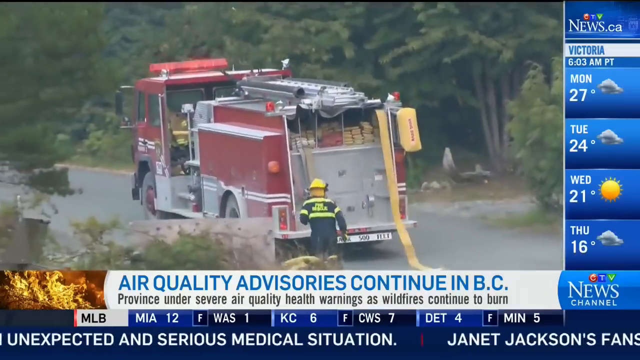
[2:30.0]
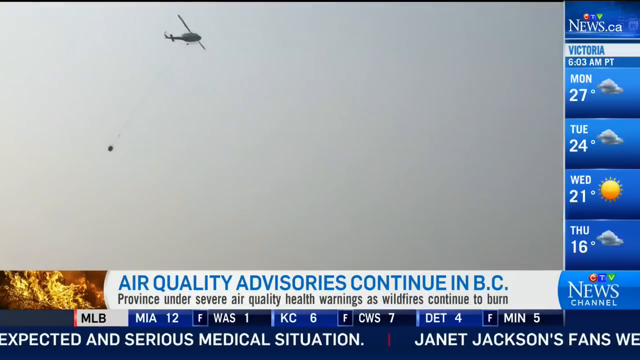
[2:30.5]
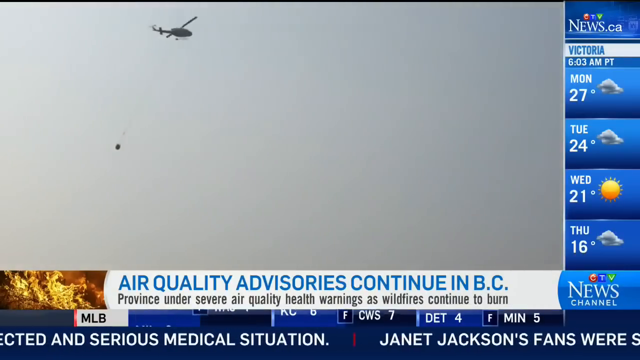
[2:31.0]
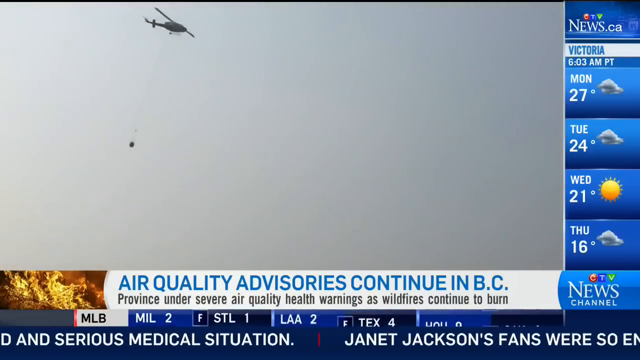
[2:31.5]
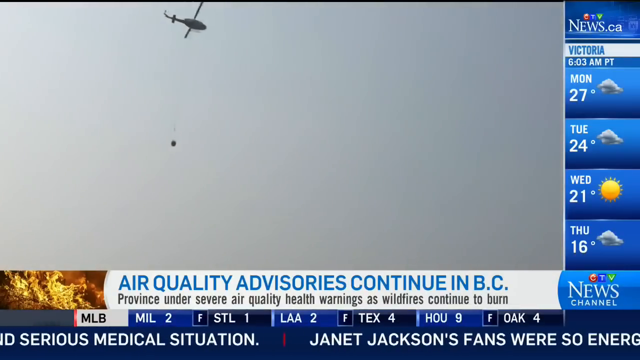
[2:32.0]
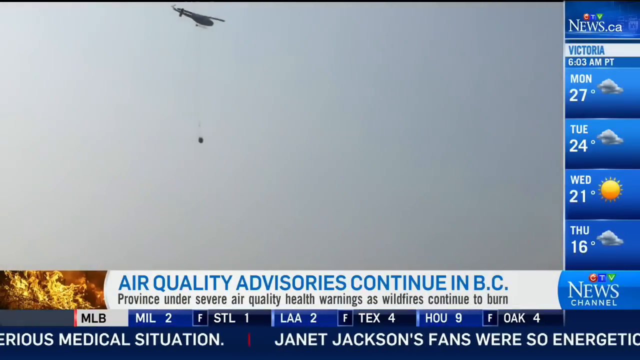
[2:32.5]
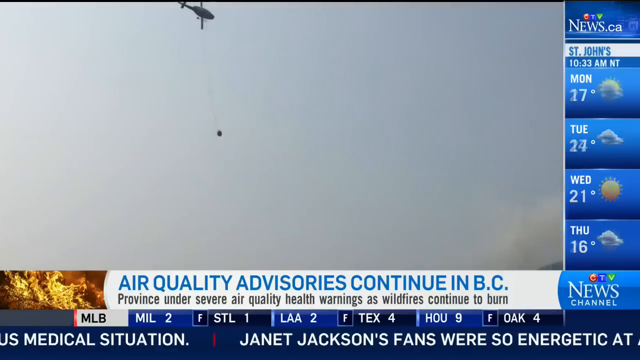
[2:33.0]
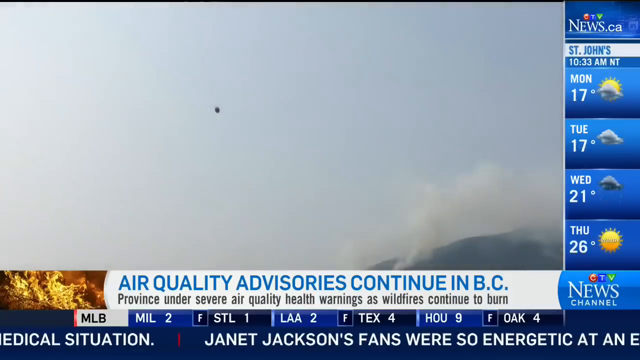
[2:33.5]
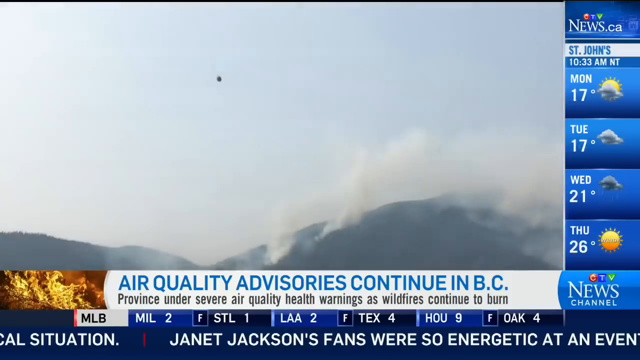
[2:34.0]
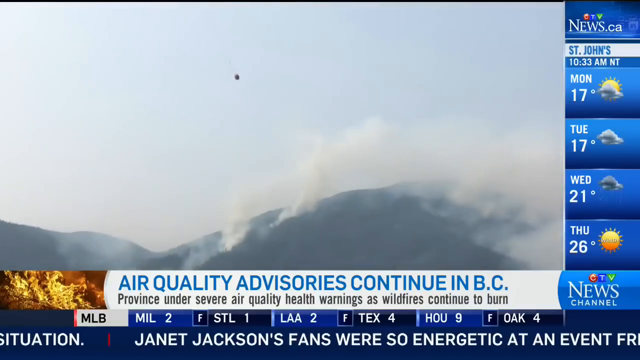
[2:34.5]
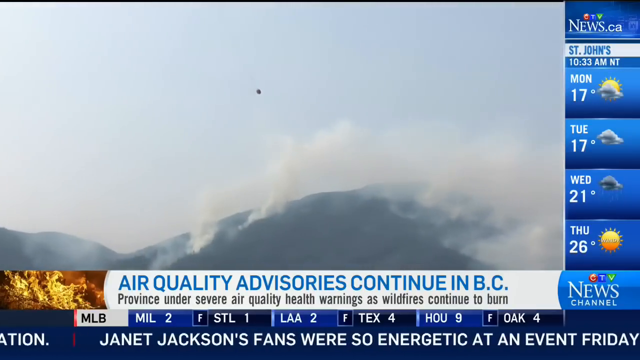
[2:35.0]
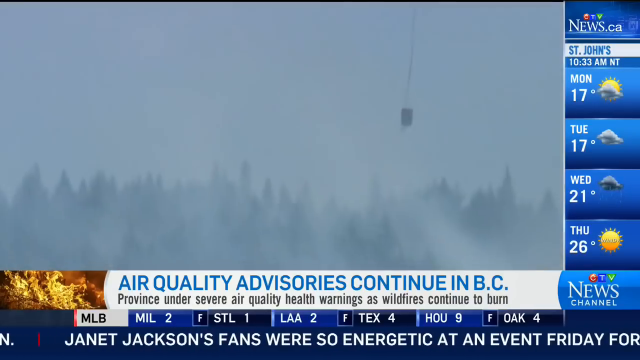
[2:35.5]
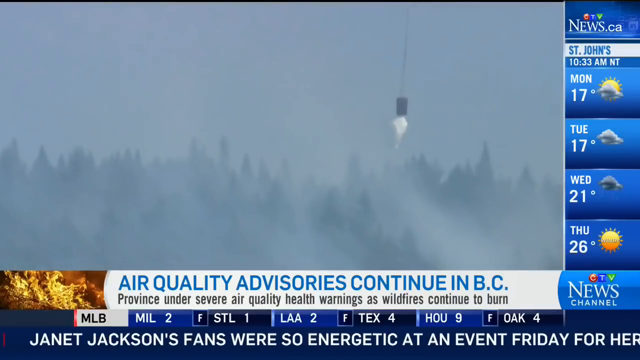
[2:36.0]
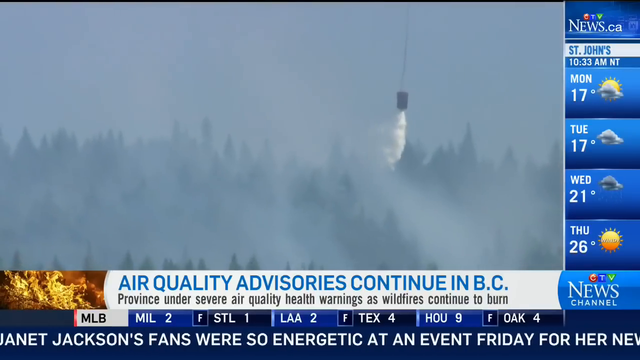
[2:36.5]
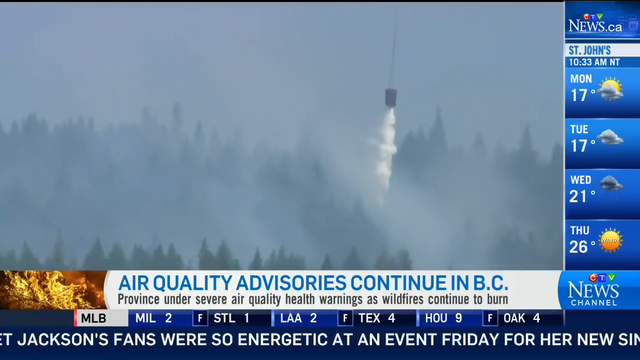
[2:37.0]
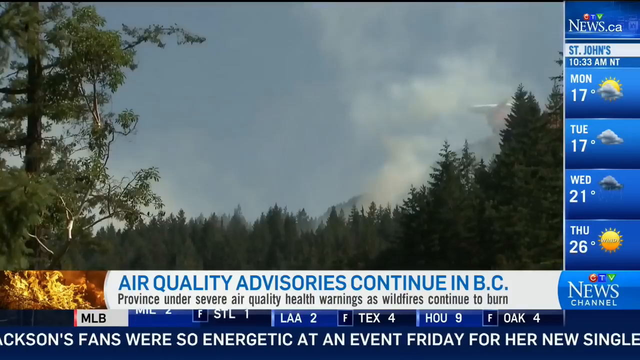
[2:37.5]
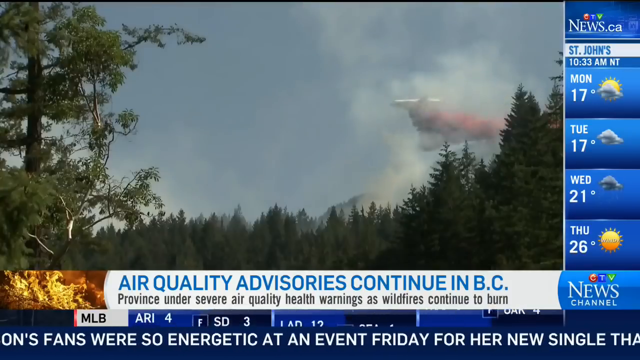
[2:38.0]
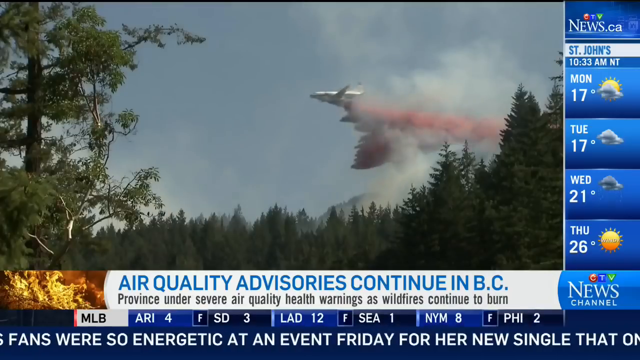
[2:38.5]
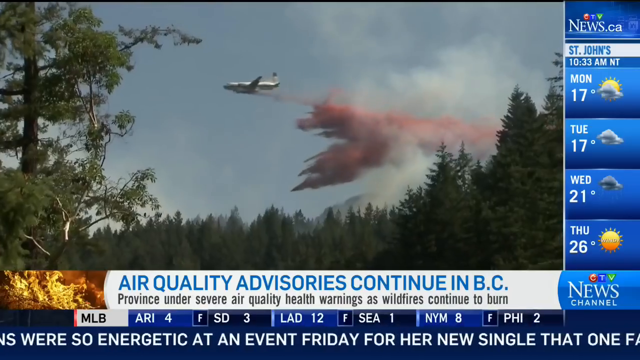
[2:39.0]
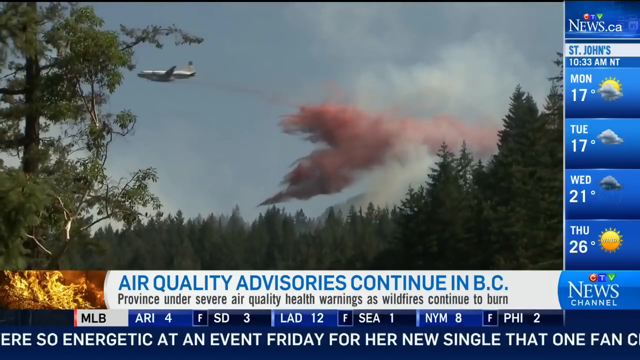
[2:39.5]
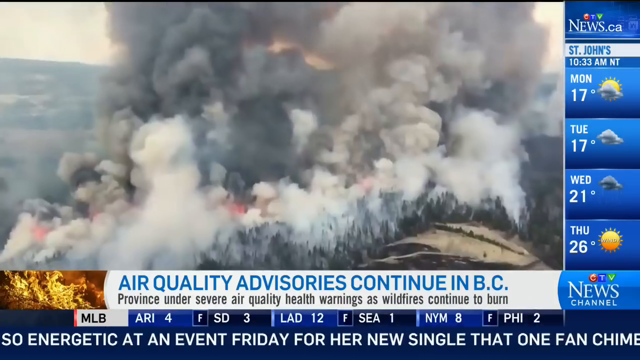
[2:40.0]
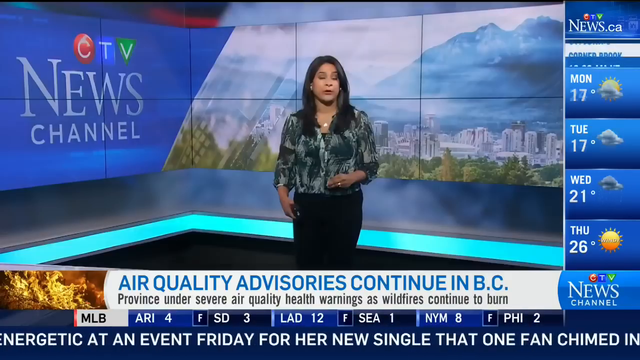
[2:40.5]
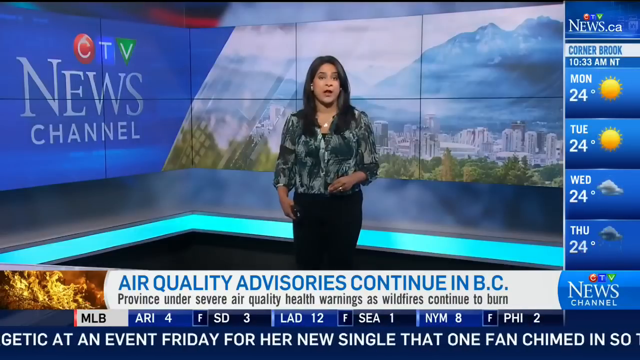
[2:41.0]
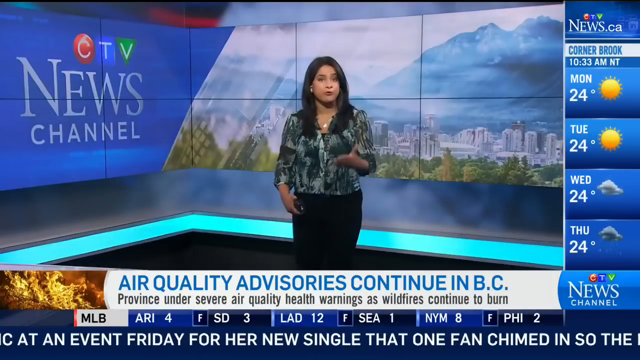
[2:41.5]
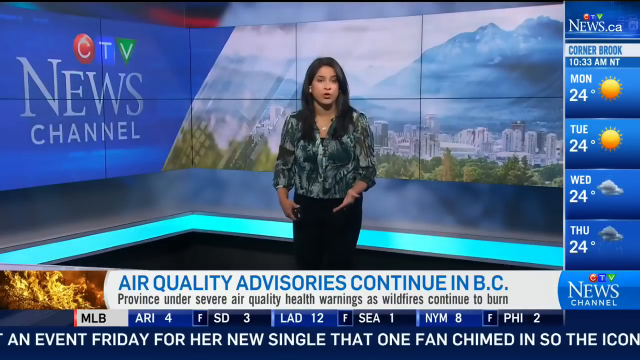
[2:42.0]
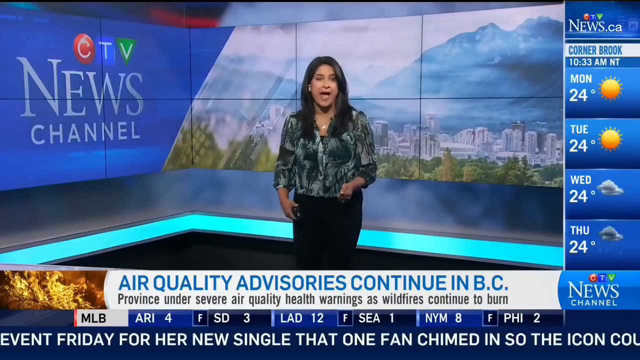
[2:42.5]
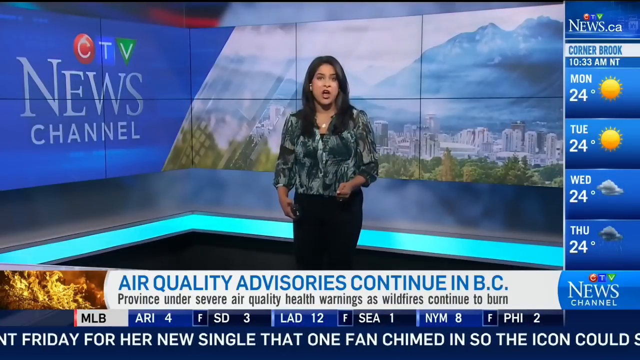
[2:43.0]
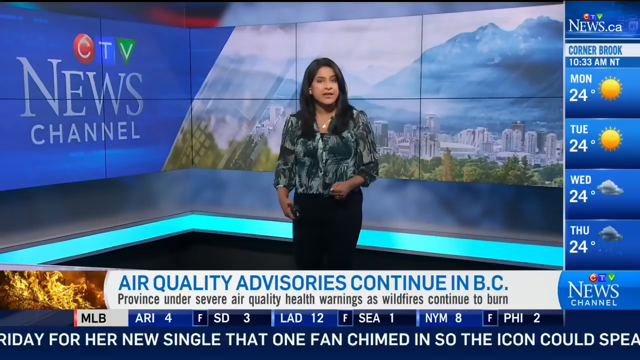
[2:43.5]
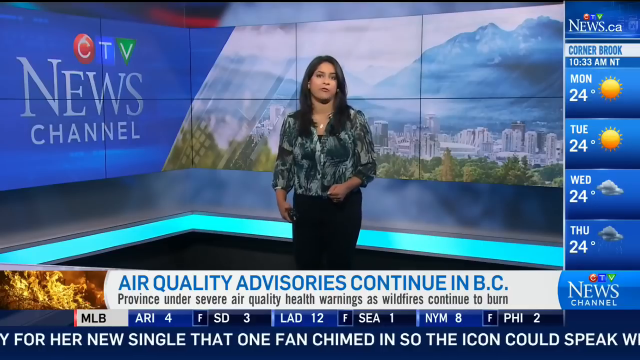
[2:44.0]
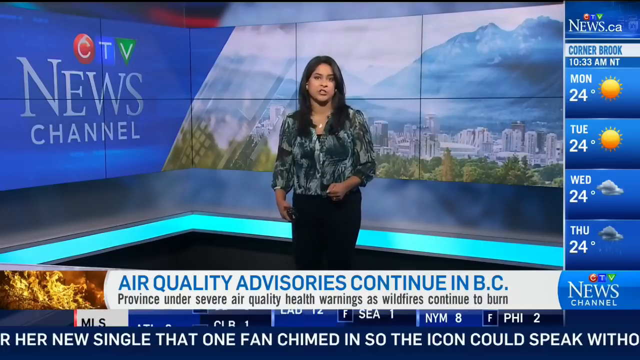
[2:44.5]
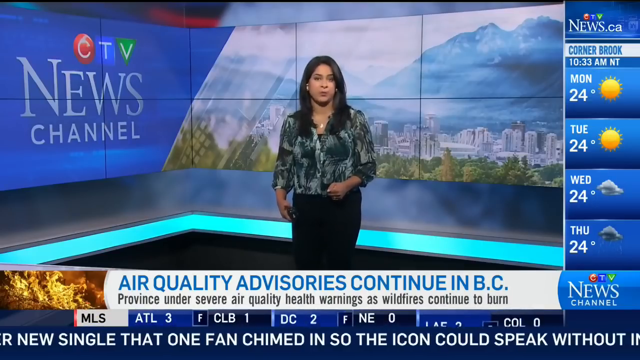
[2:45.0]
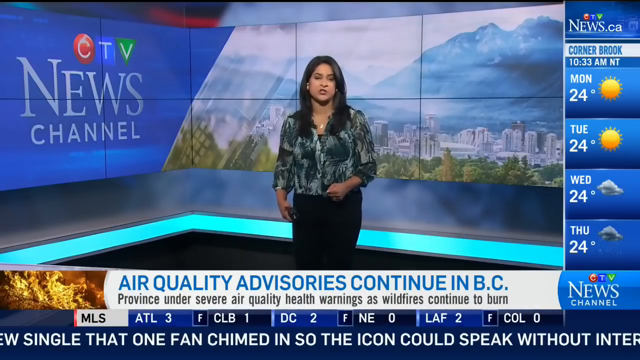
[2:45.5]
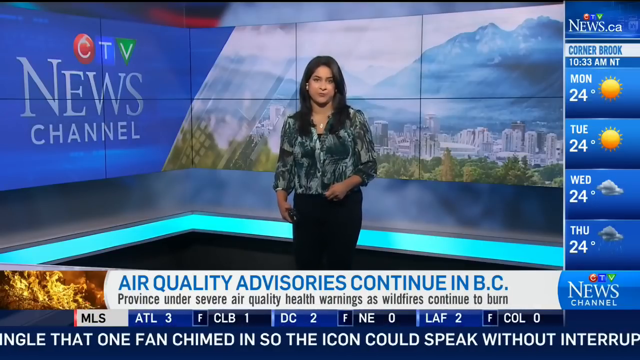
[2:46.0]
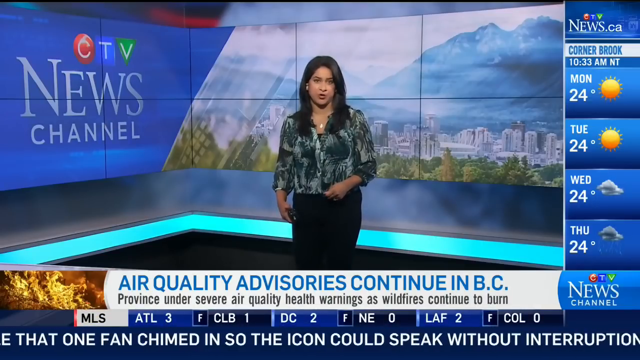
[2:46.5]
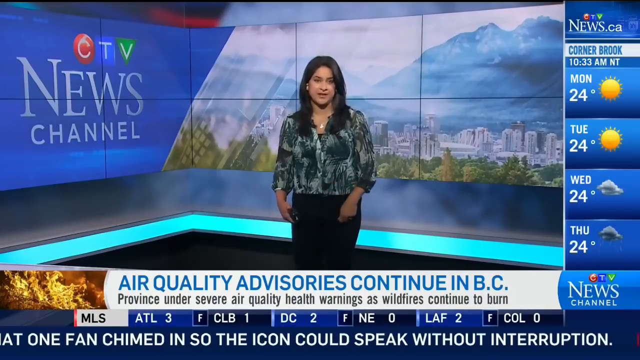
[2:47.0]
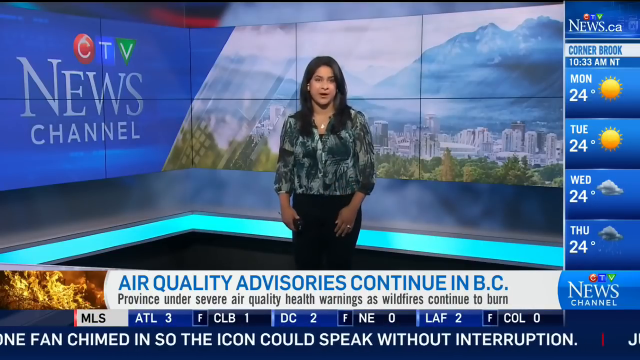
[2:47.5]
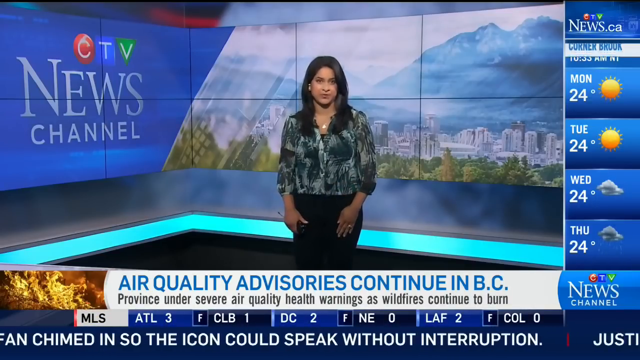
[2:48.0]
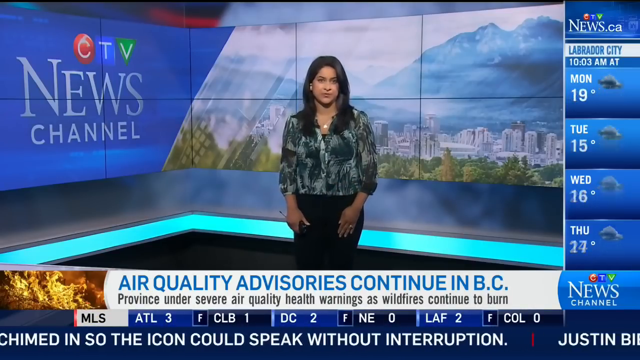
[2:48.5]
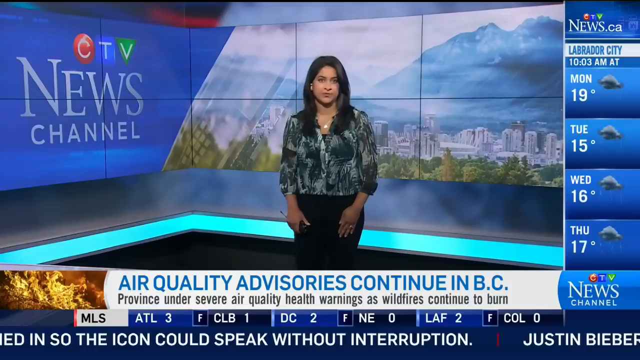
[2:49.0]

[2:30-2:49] The red fire truck, with some silver bits, travels along the road to the left side, leaving a trail of pipe behind it. The pipe is yellow and flat from being folded. A firefighter runs behind the truck, controlling how the pipe is laid. A helicopter is seen quite far off in the sky with its water bucket, working to stop the forest fire. Then the weather for Victoria is shown: Monday 27 degrees and cloudy, Tuesday 24 degrees cloudy, Wednesday 21 degrees and sunny, Thursday 16 degrees and cloudy. The helicopter hovers over the burning forest, releasing plenty of water from its bucket. Another helicopter releases thick red smoke, also trying to stop the fire.